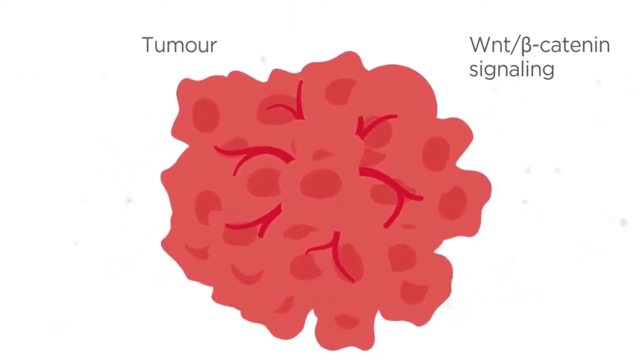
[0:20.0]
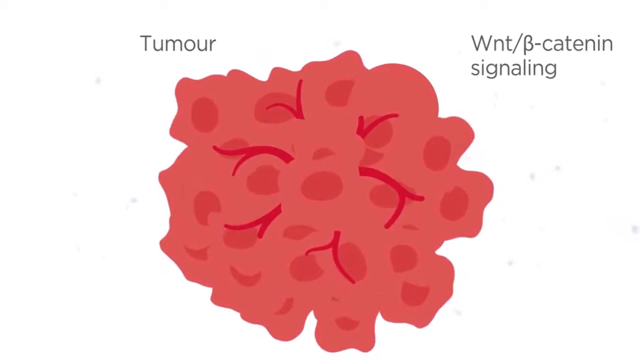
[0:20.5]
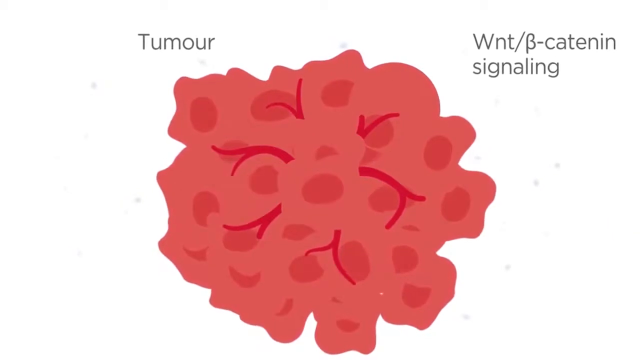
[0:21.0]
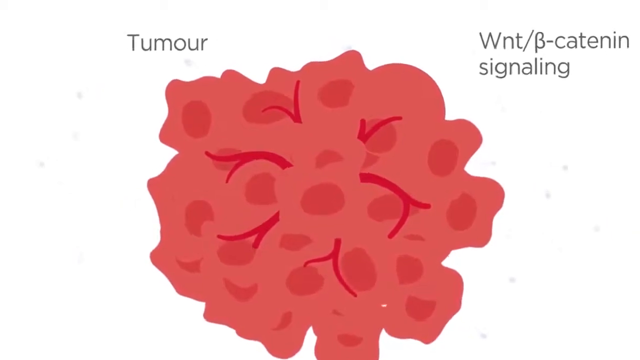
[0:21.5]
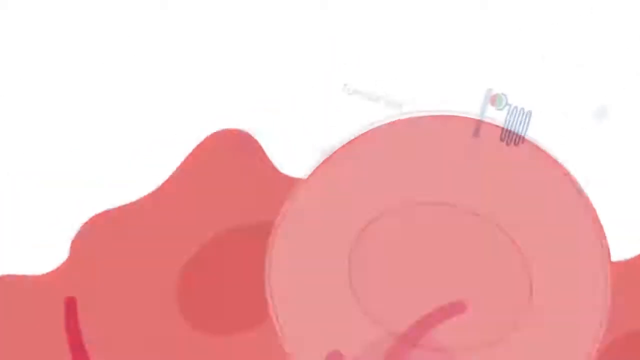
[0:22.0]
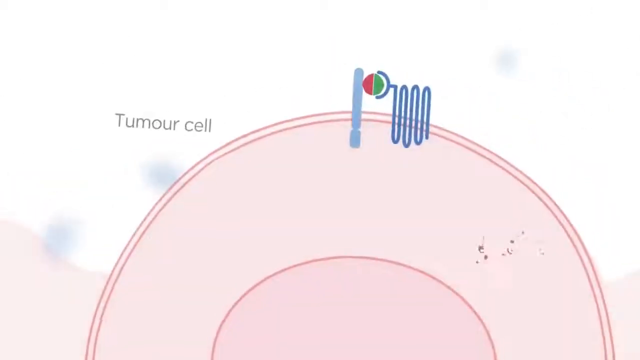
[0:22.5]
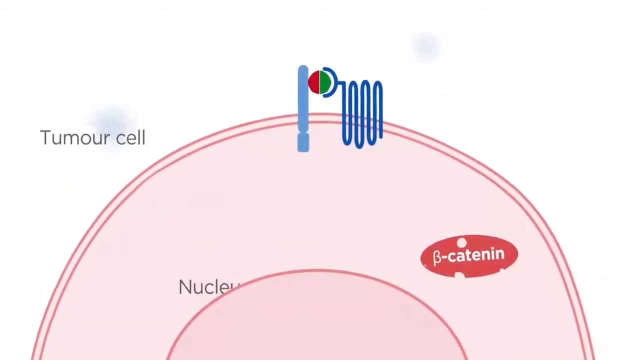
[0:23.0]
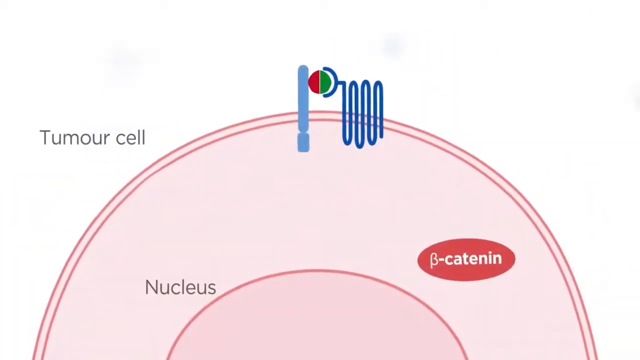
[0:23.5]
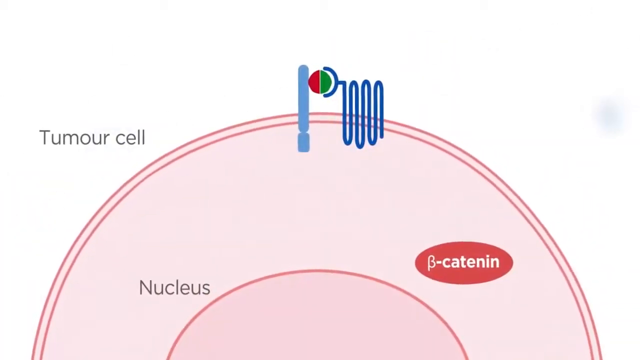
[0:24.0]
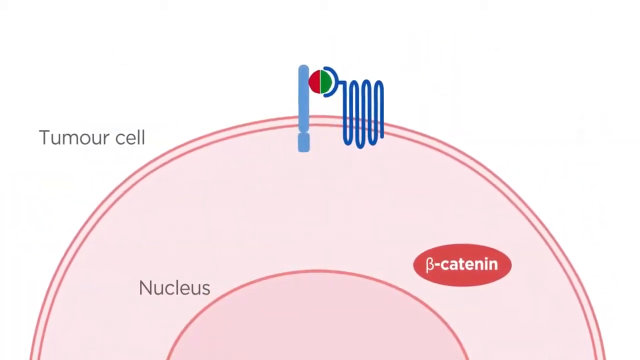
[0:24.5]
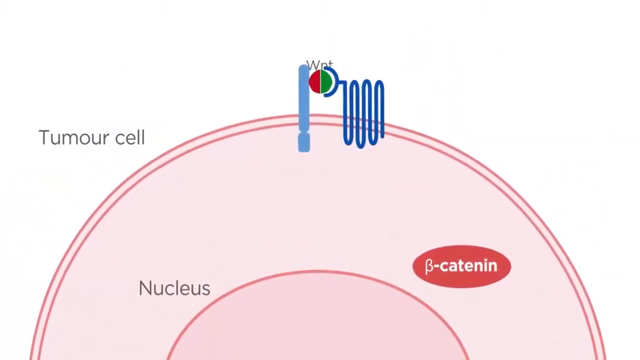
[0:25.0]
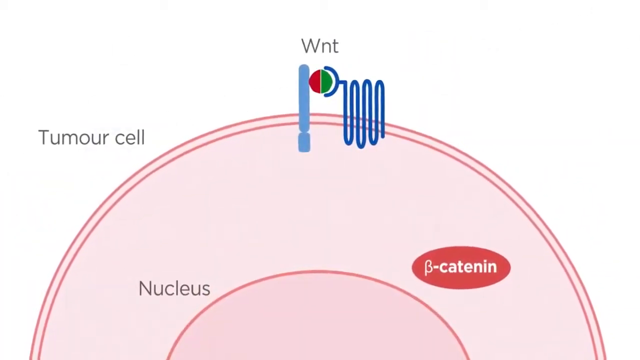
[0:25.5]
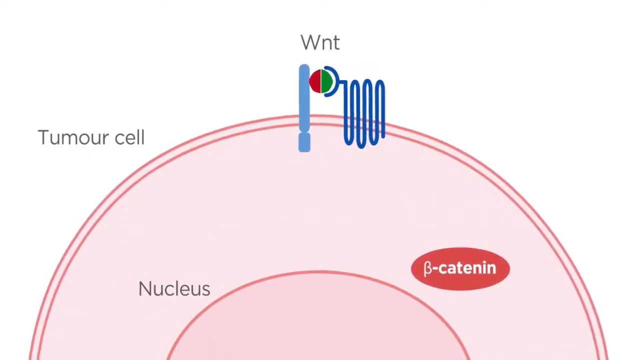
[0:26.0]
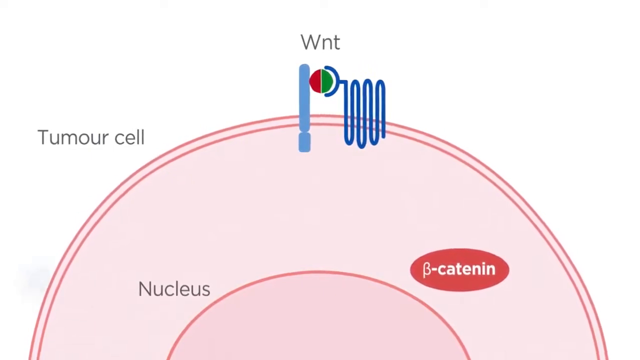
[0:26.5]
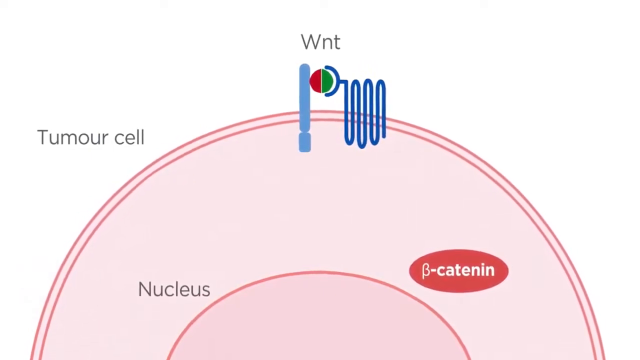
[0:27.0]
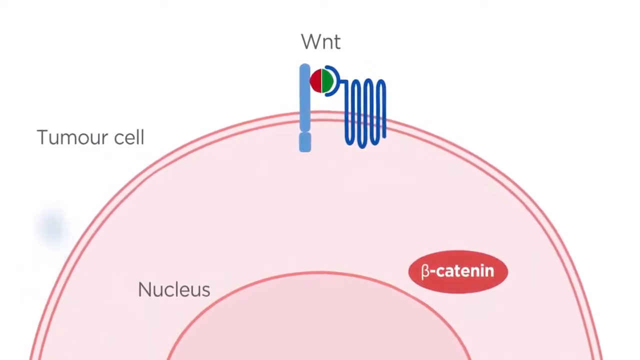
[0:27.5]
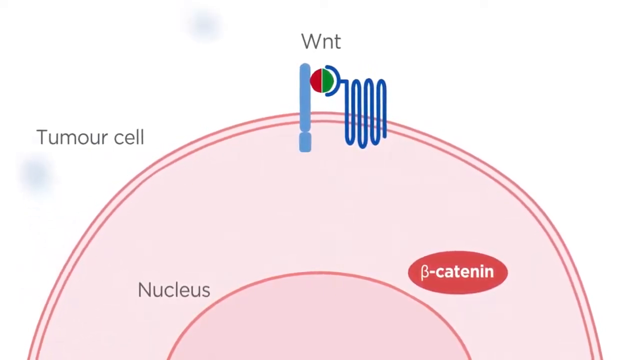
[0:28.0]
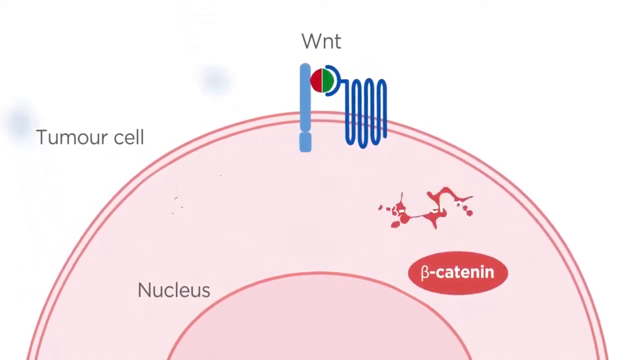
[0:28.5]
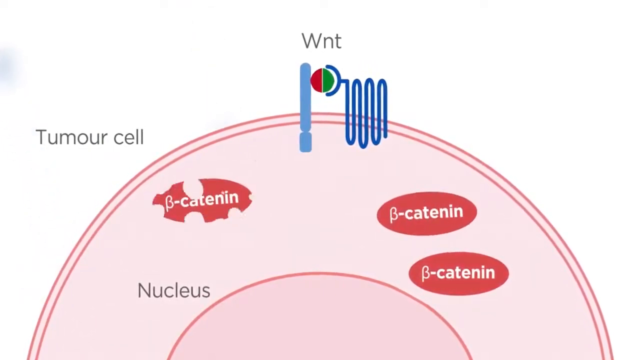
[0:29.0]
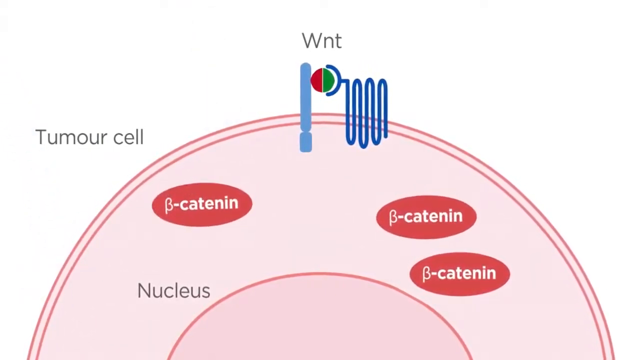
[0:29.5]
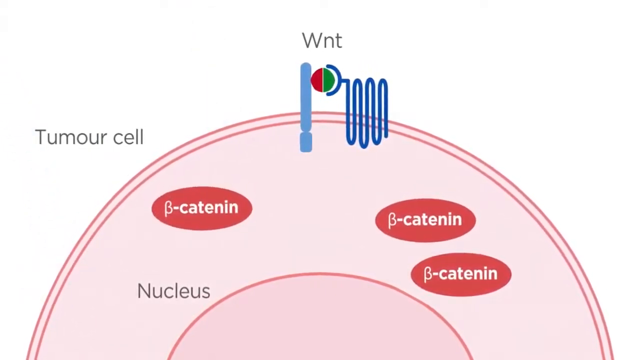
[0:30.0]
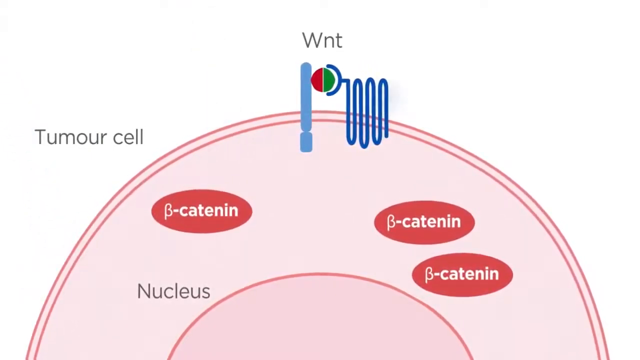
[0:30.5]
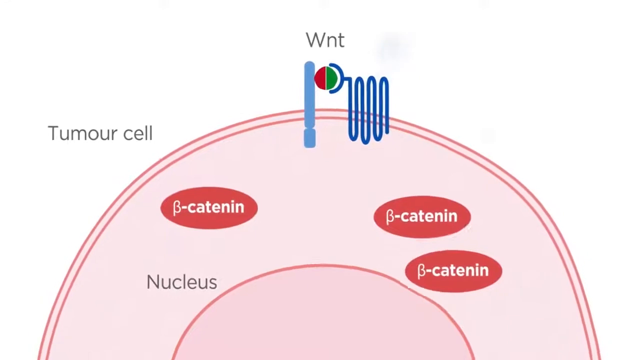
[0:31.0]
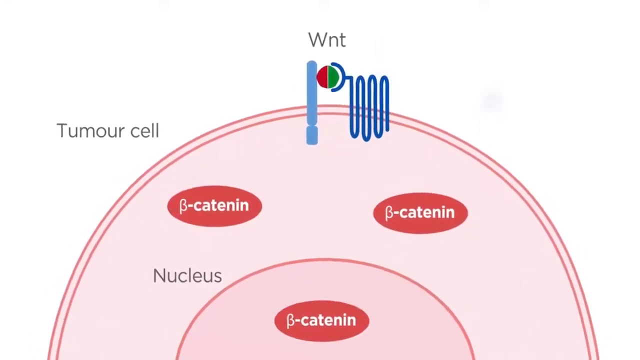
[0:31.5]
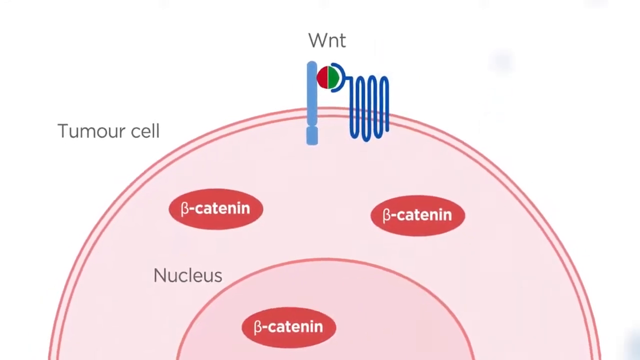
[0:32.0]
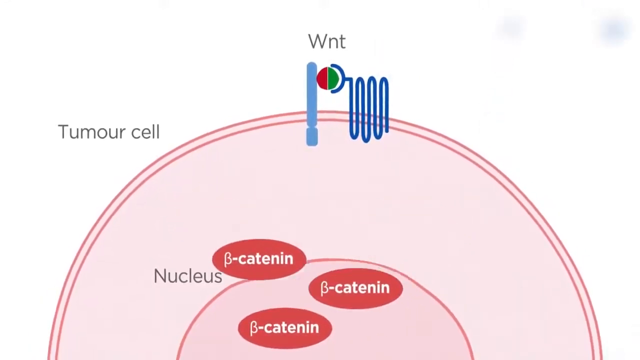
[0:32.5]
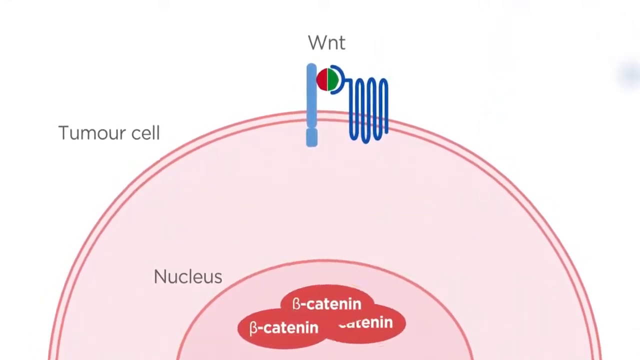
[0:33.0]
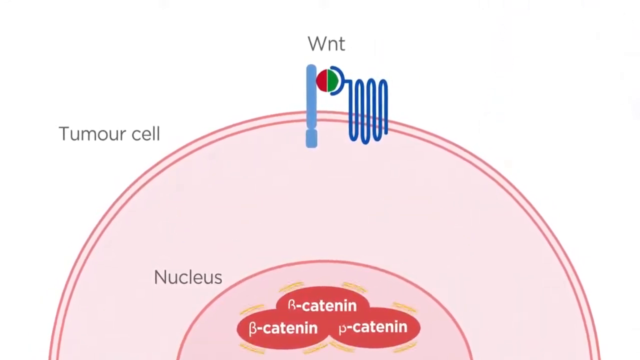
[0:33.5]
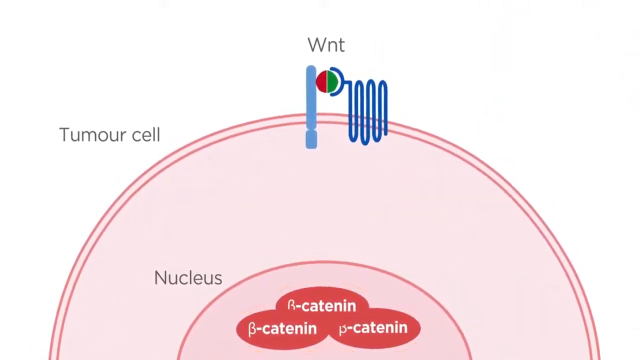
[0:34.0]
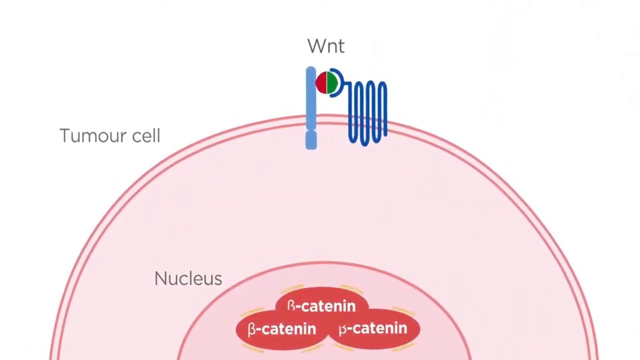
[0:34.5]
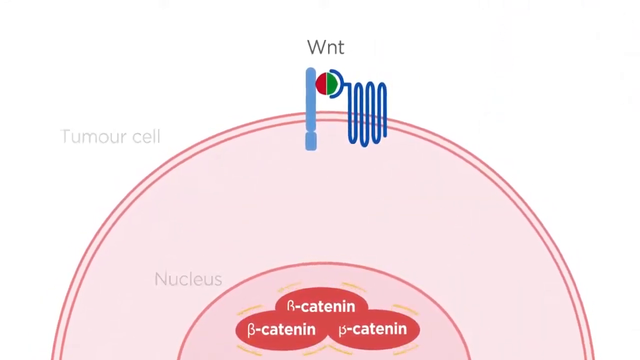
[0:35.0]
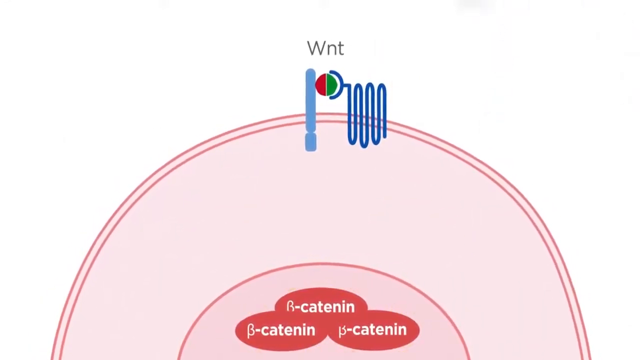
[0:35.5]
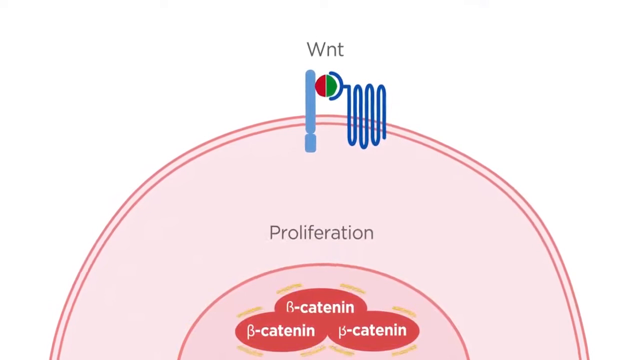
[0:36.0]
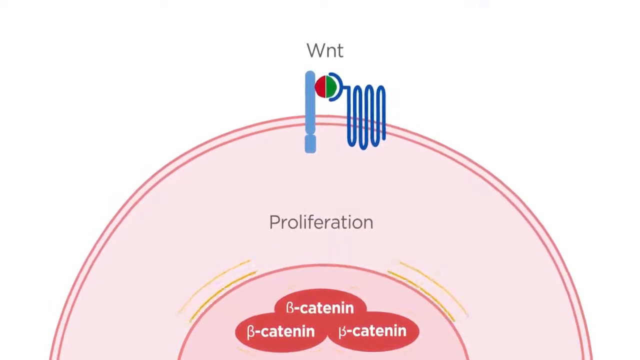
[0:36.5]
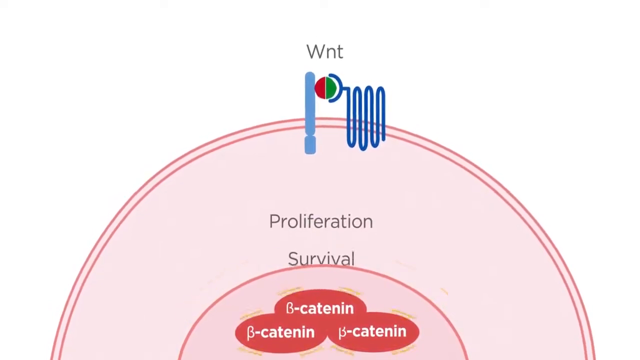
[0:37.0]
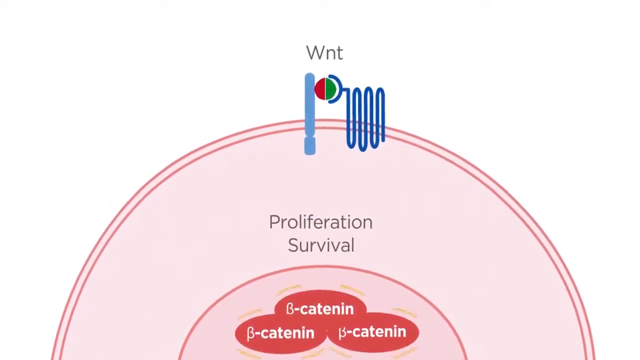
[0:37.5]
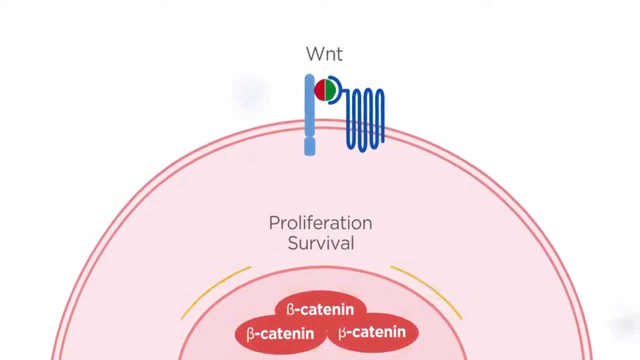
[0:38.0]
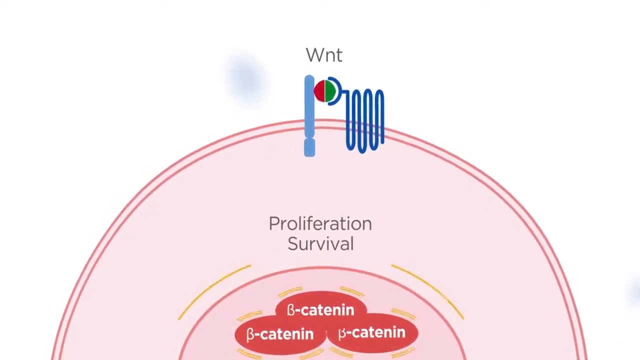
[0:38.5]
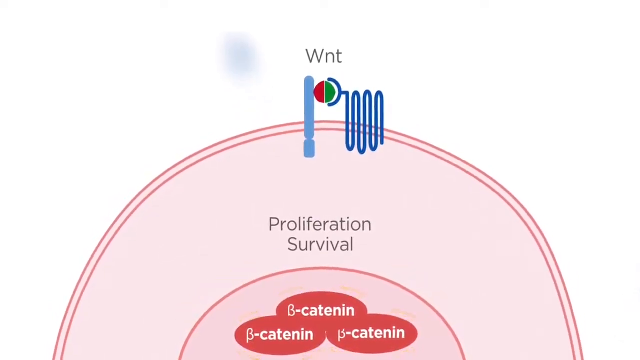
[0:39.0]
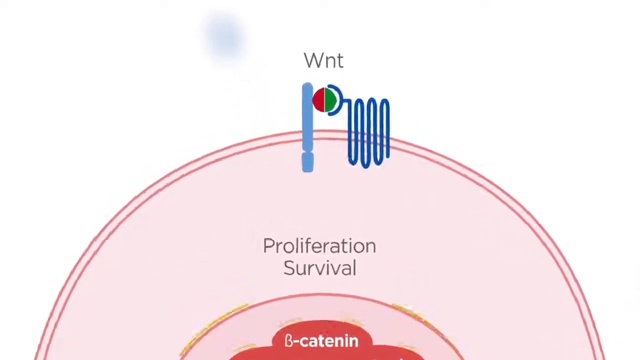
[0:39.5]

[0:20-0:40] What looks to be the molecule in question appears in animated form. It has a pink body, with the text "tumor" on the left side and various compound text on the right side. The view zooms in onto what looks to be the edge of the molecular compound, showing the same graphic as at the start, with the blue squiggly line and the circle that is green on one side and red on the other. Text on the left reads "tumor cell," text at the top reads "WNT," the bottom left reads "nucleus," and the right side reads "B-catenin." The word "WNT" animates, and various cell functions are kind of animated, going up and down. More of the B-catenin compound shows up and starts floating around, then the compounds move toward the middle of the cell, and the text "proliferation and survival" comes out. At the very end, the video zooms in to the top of the graphic again.